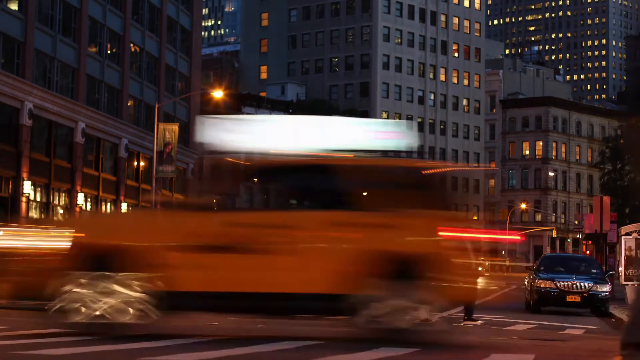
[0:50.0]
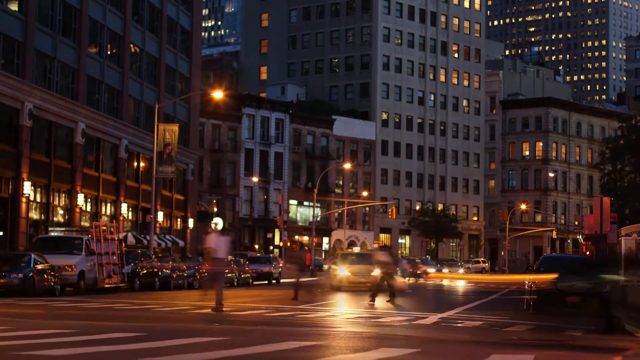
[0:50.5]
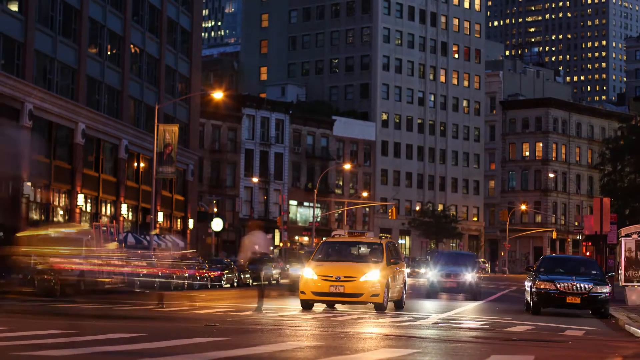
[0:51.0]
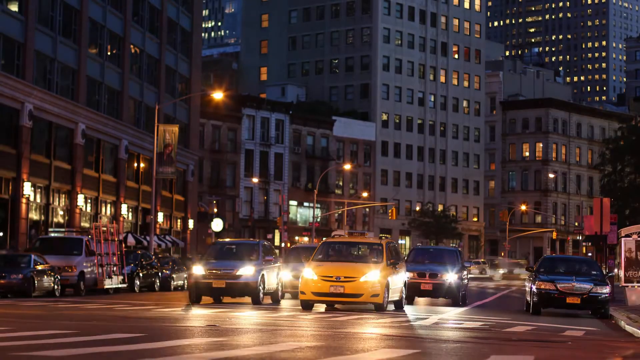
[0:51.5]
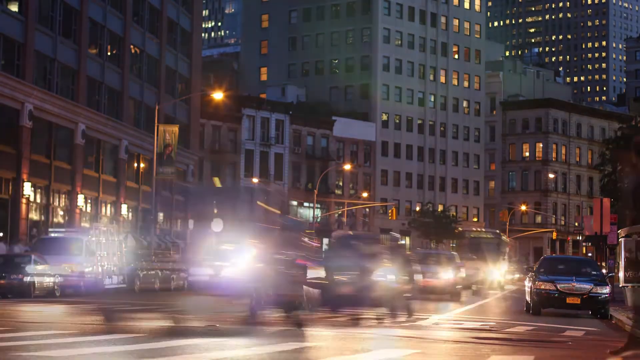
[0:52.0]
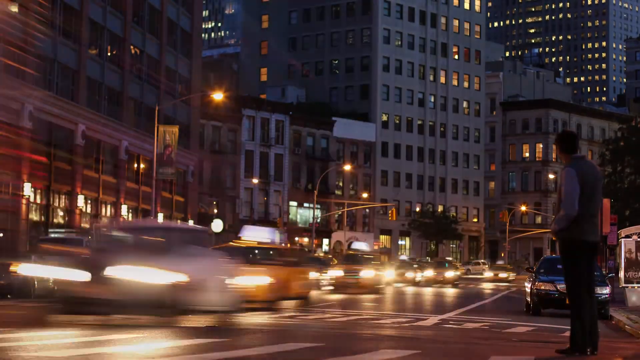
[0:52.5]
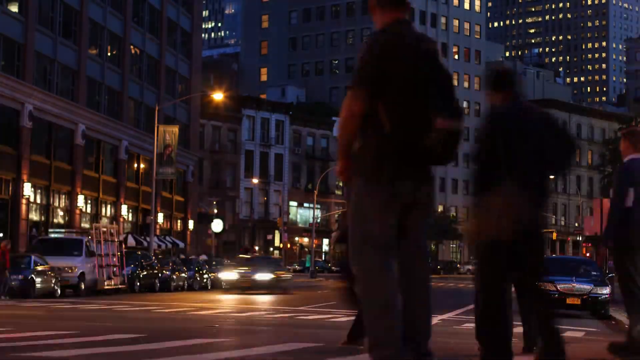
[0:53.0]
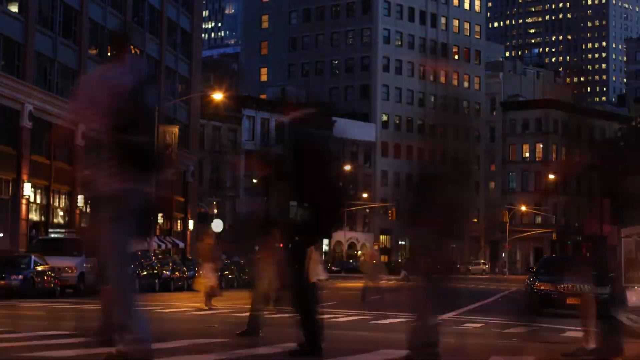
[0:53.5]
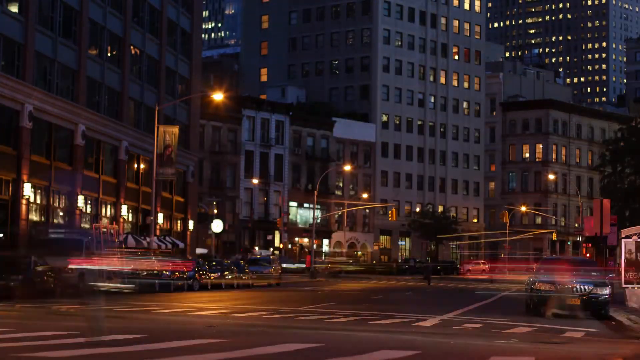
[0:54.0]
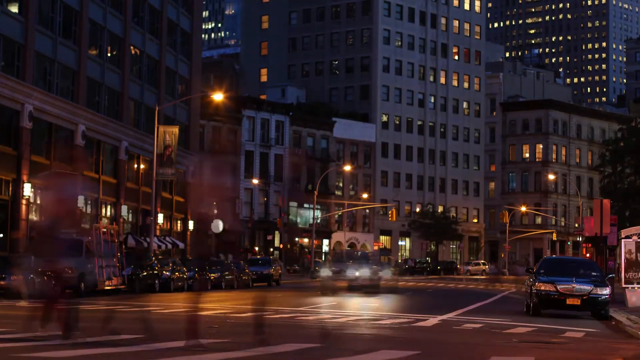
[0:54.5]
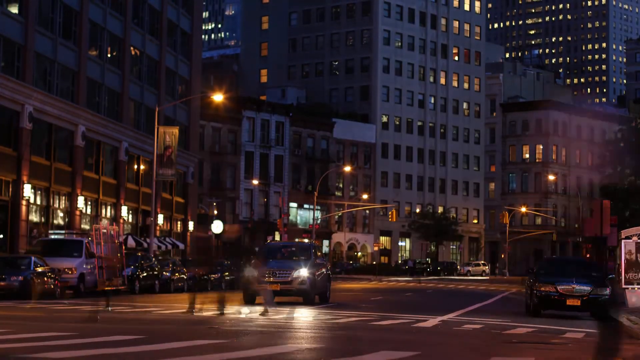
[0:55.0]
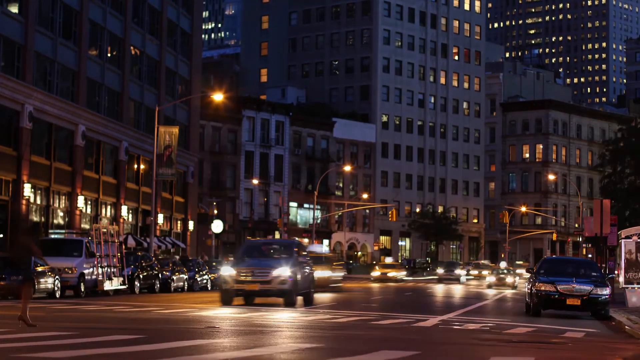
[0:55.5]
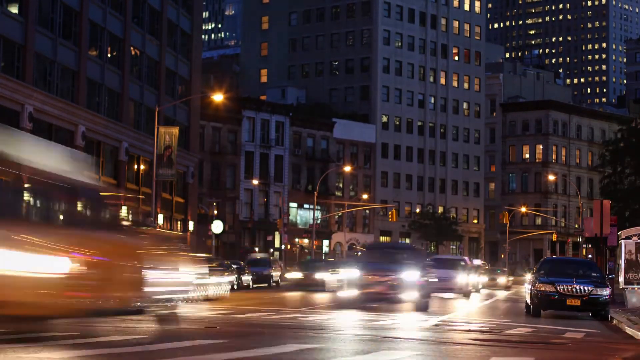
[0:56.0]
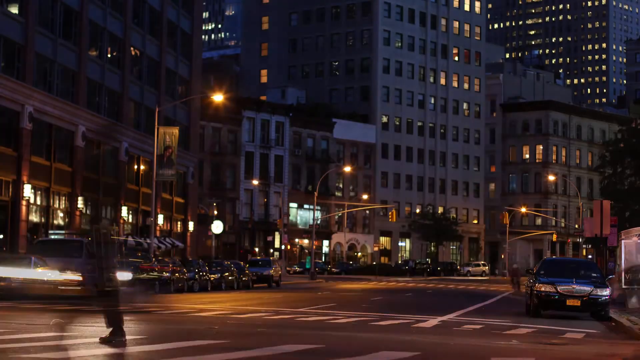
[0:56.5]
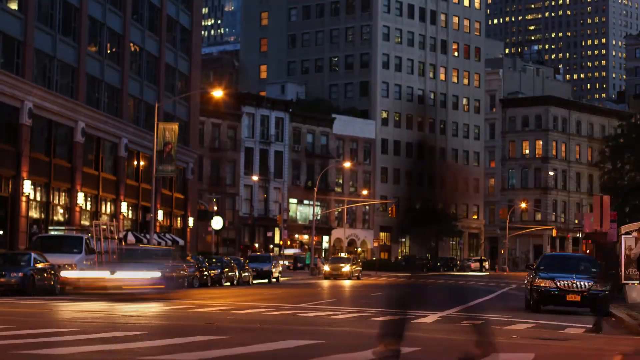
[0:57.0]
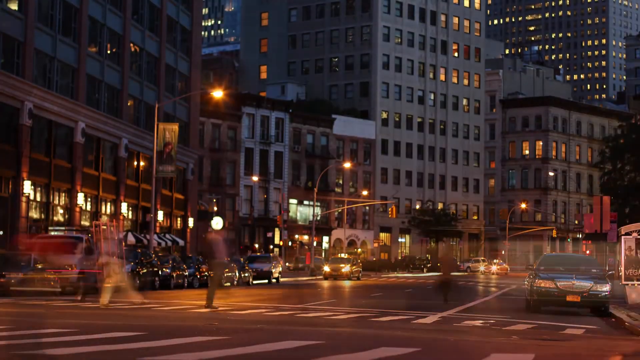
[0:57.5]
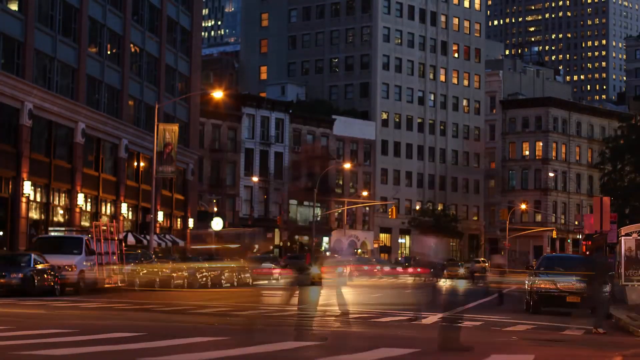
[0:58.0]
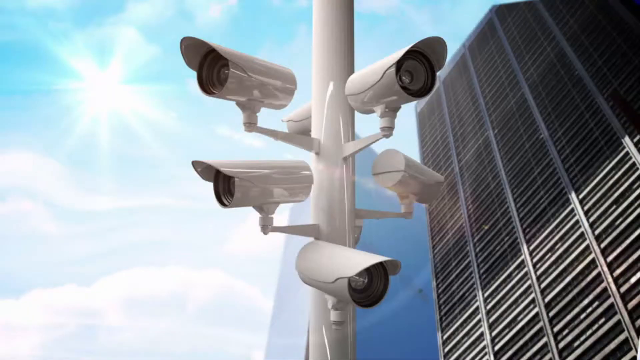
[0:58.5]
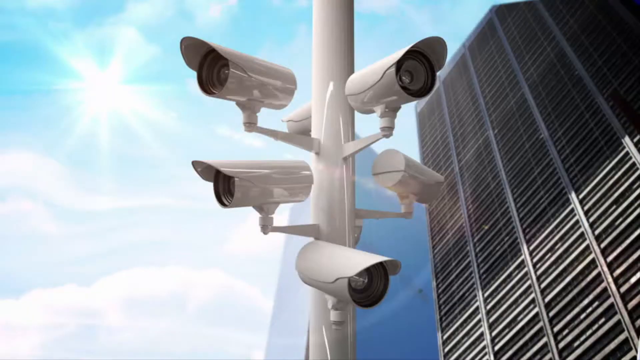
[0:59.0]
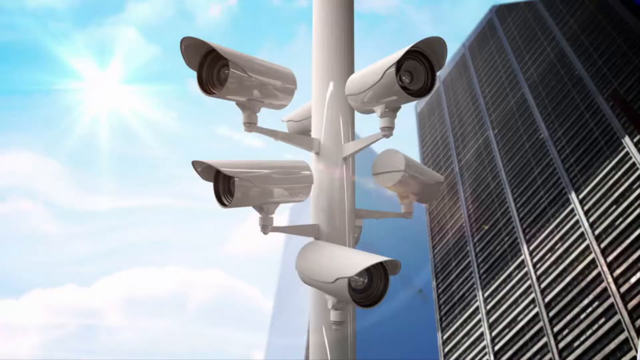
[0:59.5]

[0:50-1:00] A very fast shot shows the nightlife of a city that looks like it might be New York. Cars drive down the road, leaving quick highlights, and cars, vans, buses and humans pass by very quickly, one by one. Skyscrapers stand in the background with lights on in the windows. The video then cuts to an image of a light post with many cameras on it, maybe 6, covering all angles.